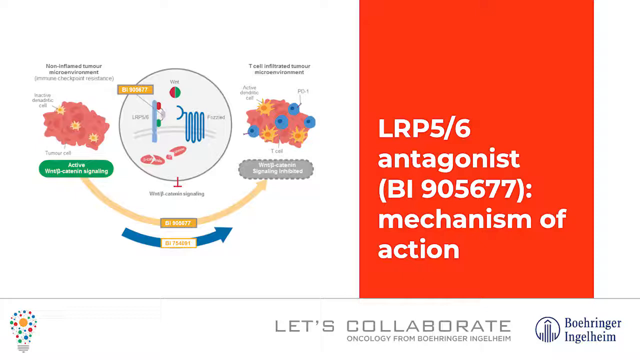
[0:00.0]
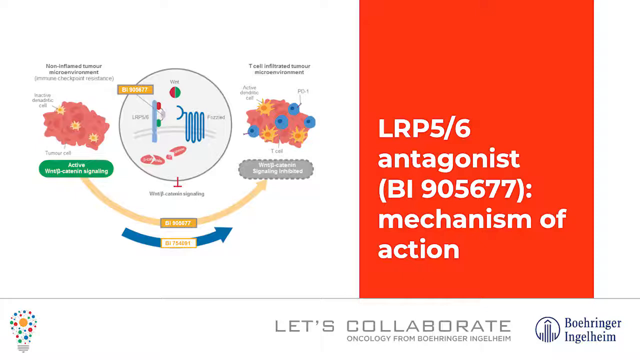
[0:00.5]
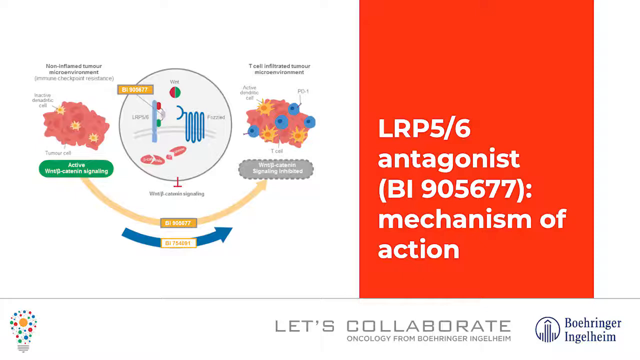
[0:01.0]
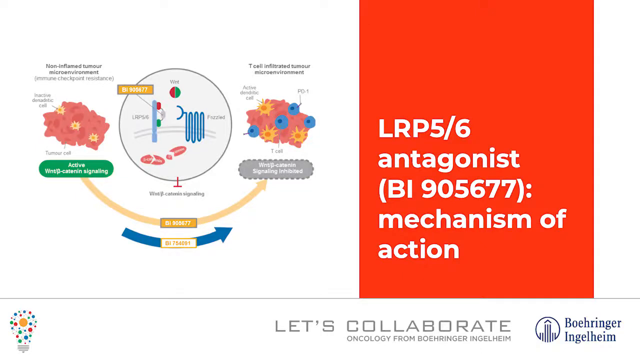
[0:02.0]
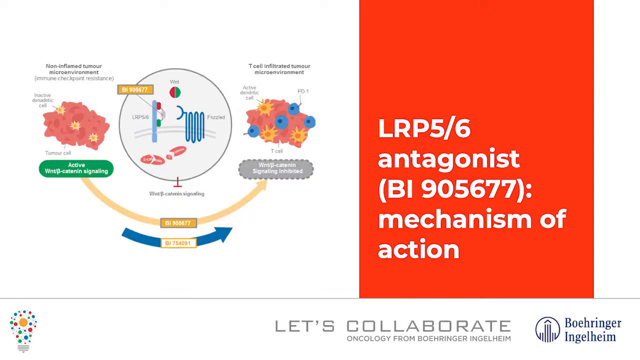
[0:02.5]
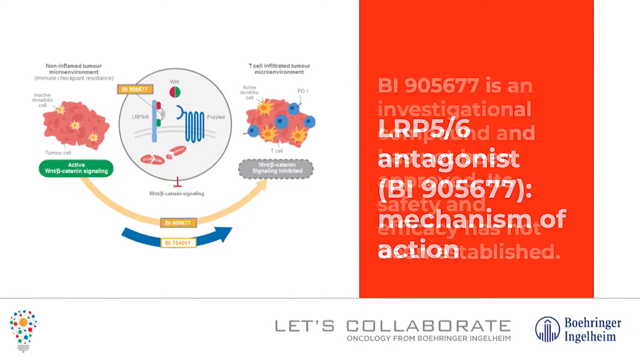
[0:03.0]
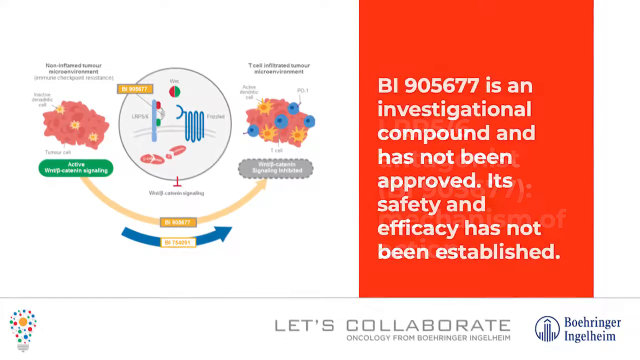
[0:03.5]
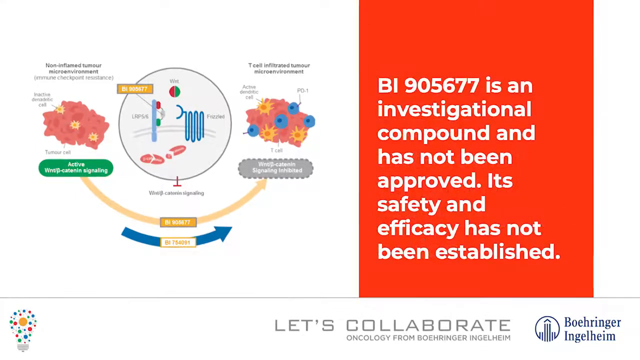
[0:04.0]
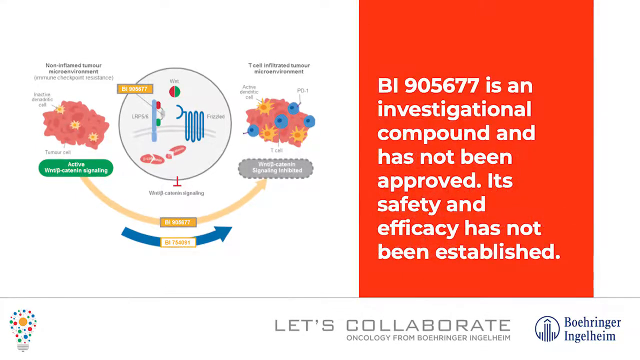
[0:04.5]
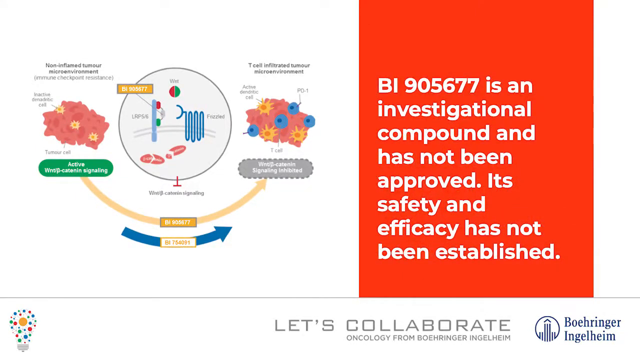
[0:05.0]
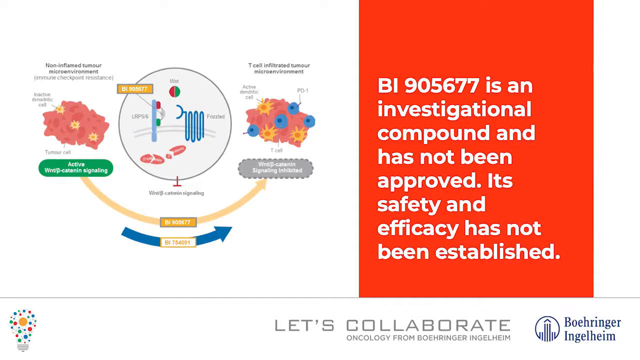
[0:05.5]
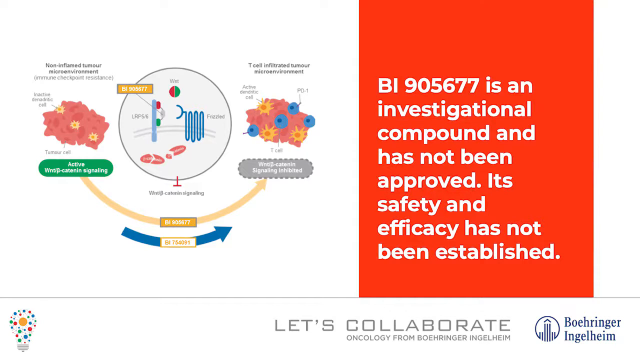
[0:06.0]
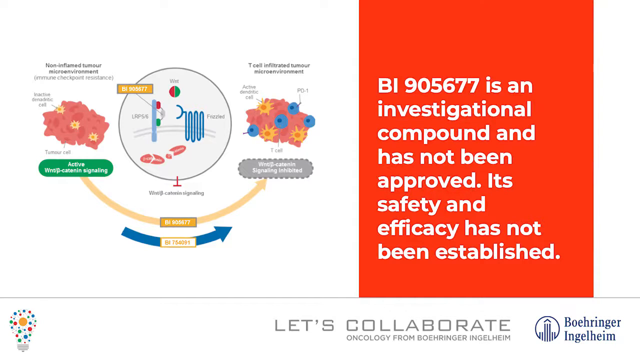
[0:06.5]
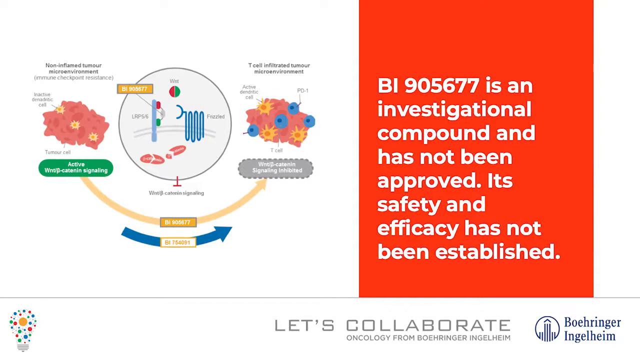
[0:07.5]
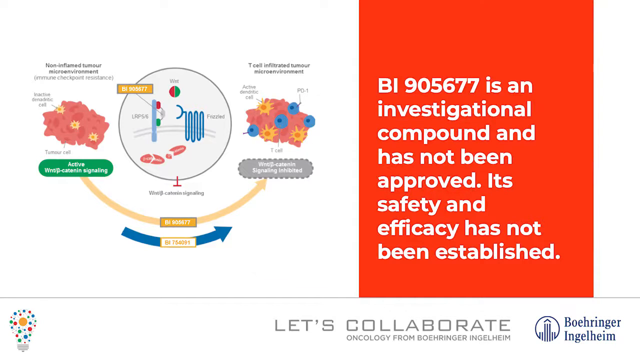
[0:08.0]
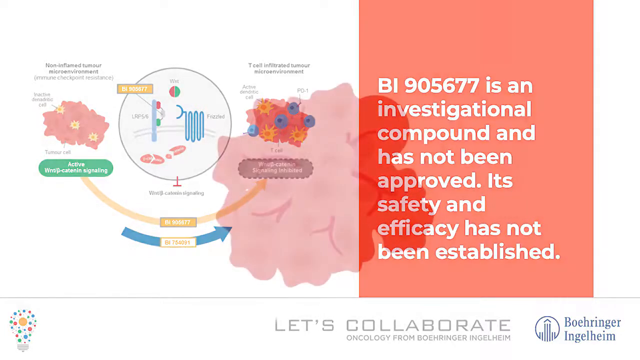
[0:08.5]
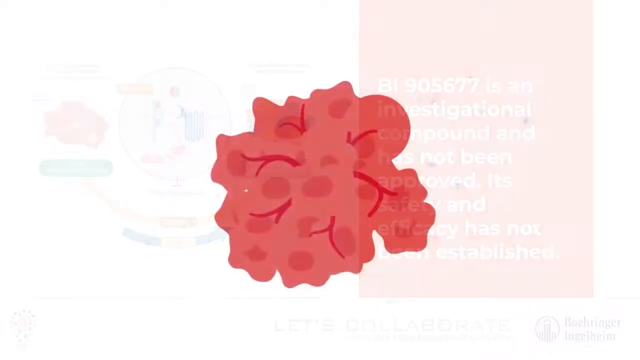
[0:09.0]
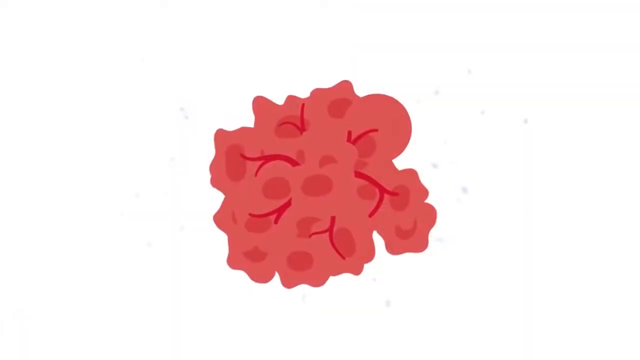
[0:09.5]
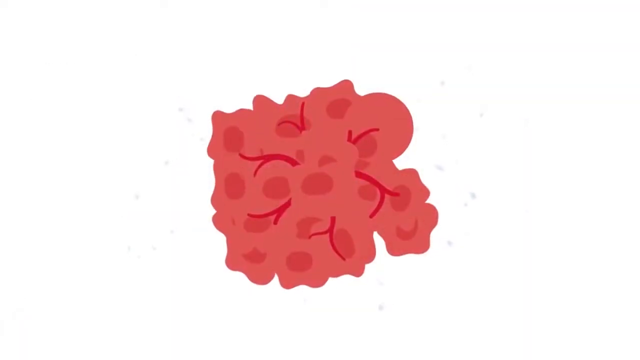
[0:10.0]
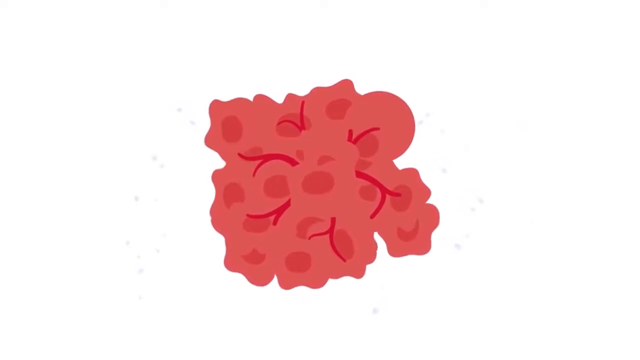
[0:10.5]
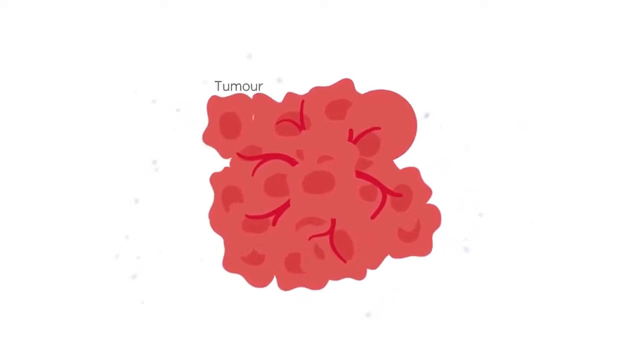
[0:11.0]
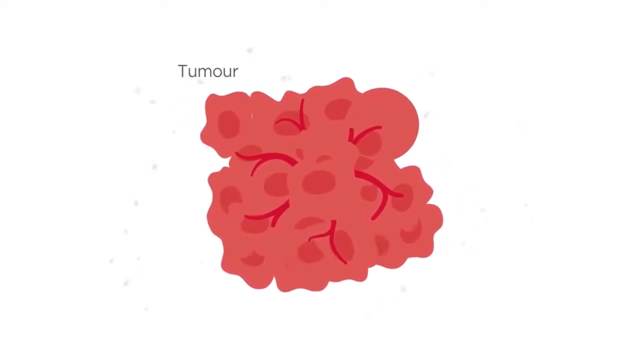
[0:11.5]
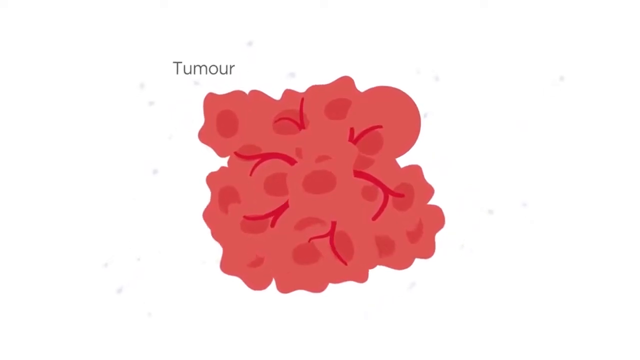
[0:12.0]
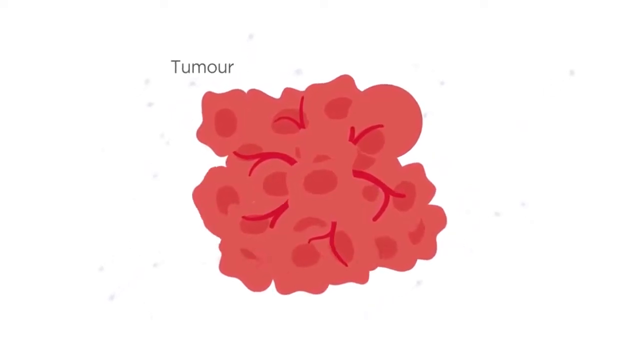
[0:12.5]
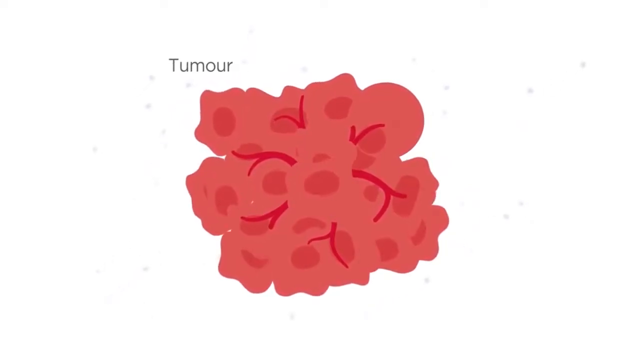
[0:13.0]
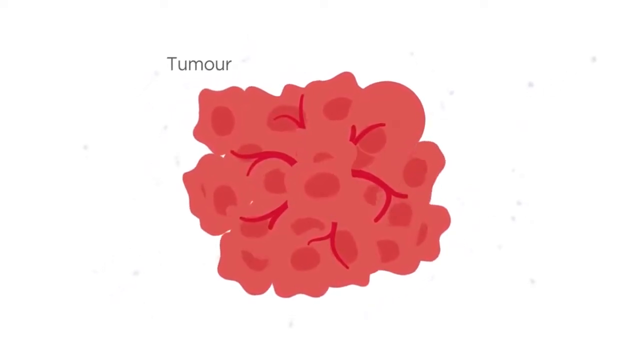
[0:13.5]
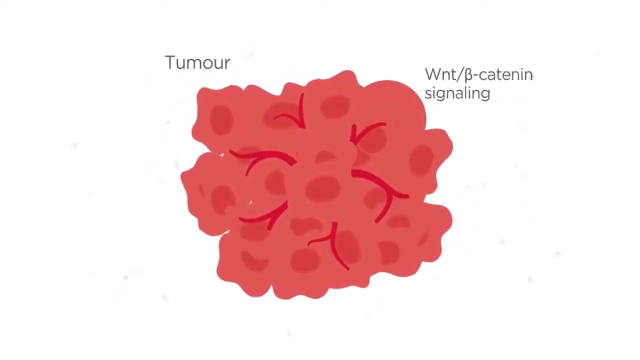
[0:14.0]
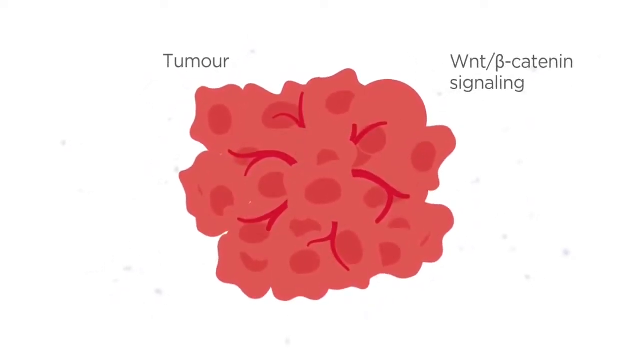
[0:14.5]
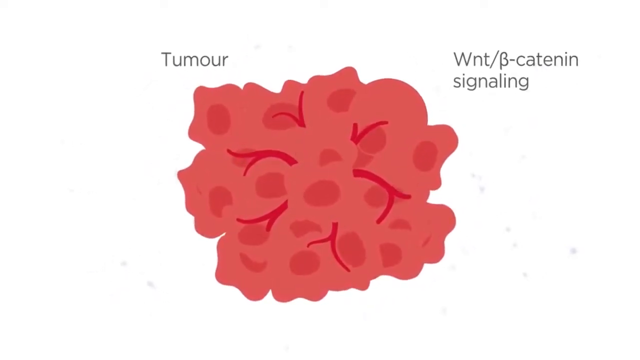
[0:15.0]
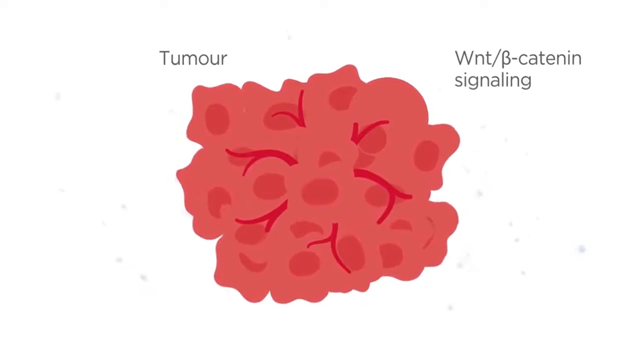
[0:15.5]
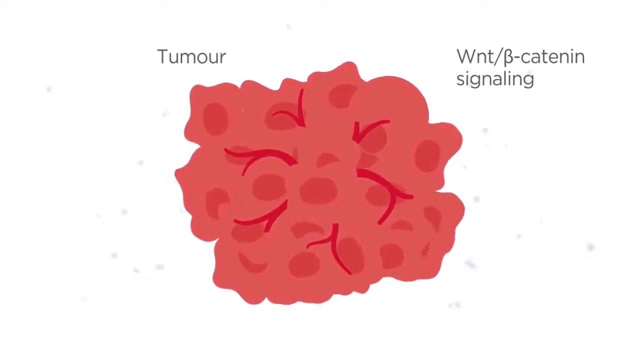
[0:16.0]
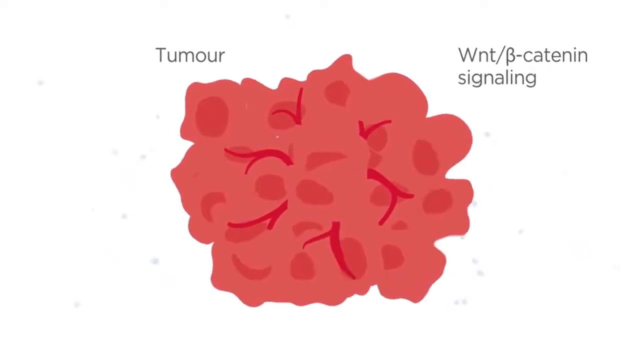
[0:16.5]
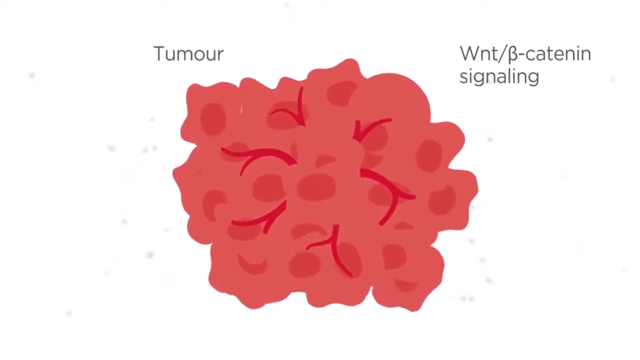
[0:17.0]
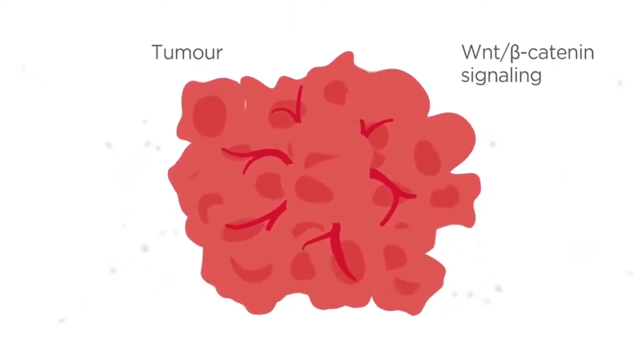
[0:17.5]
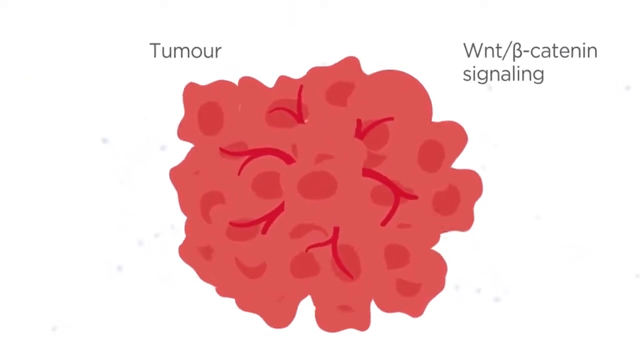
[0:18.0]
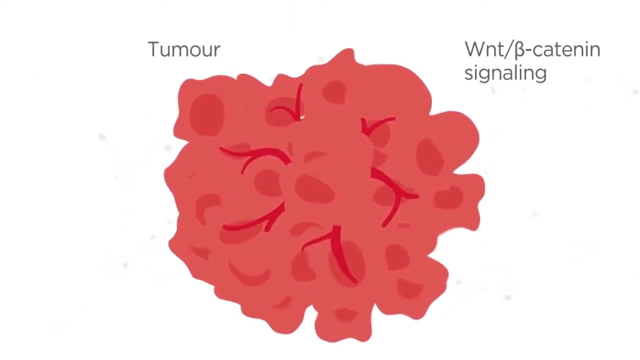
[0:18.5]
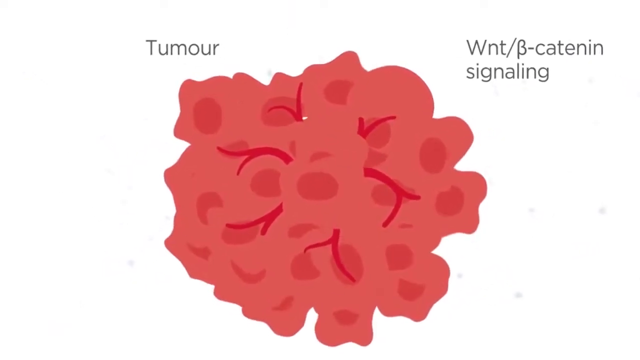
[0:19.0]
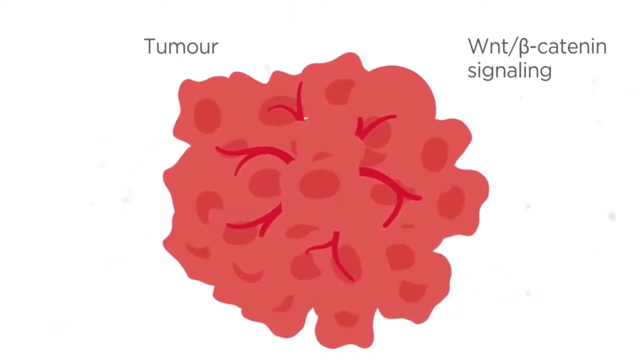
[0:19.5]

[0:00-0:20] The video looks to be a presentation, like a PowerPoint presentation. The first slide has what looks to be a red box on the side with white text reading "BI-905-677 is an investigational compound and has not been approved. Its safety and efficacy has not been established." On the left side is a white background with various objects that look to be some type of medical bacteria or enzymes. A circle in the center gives a further outlook, with a closer view of two compounds on the left and the right. On the left, a green call-out box says "active," and on the right is a more purplish box with dotted lines around it. Inside the circle are a blue squiggly line and various other shapes, including a circle with a green right side and a red left side. On the bottom portion of the image is a yellow circular arrow, with a blue circular arrow underneath it.